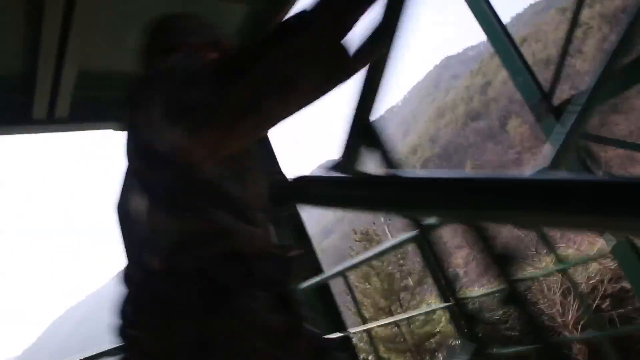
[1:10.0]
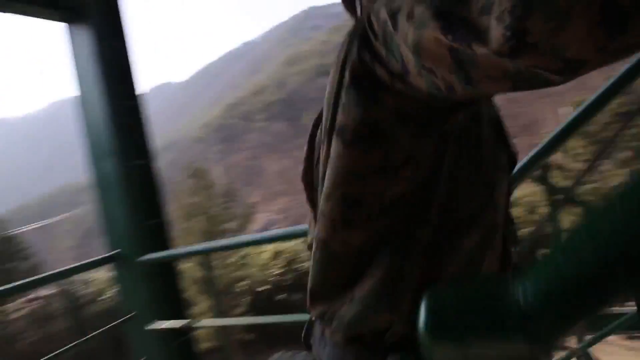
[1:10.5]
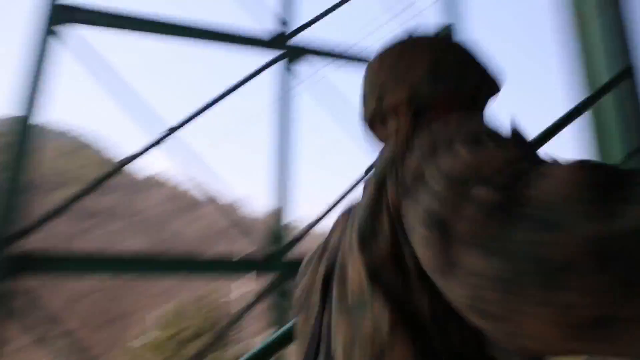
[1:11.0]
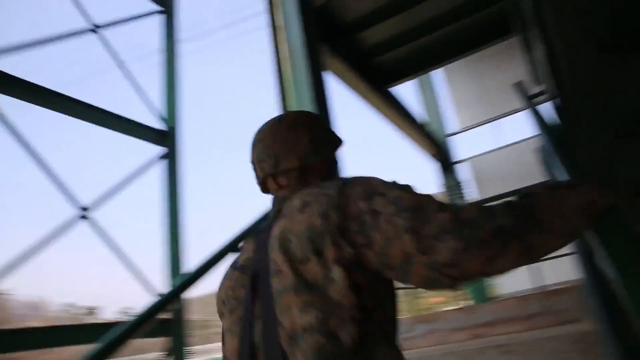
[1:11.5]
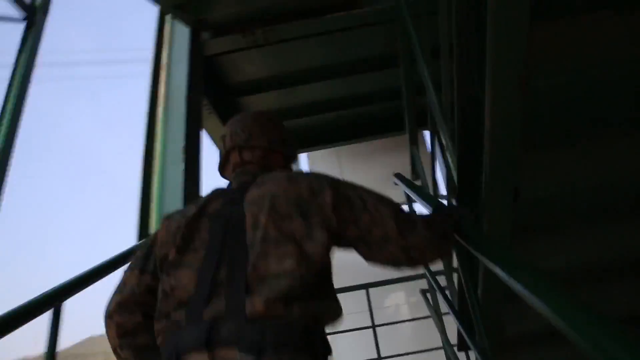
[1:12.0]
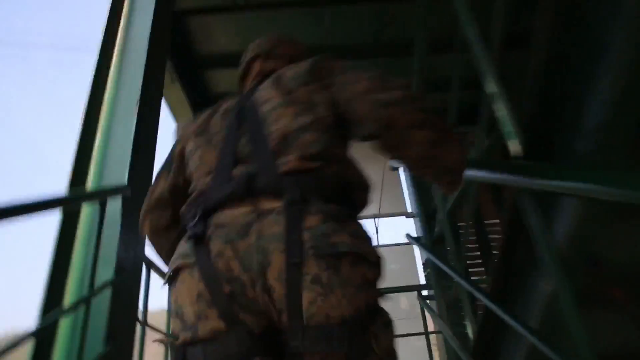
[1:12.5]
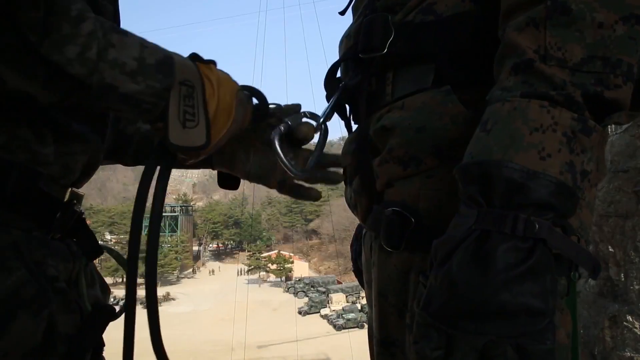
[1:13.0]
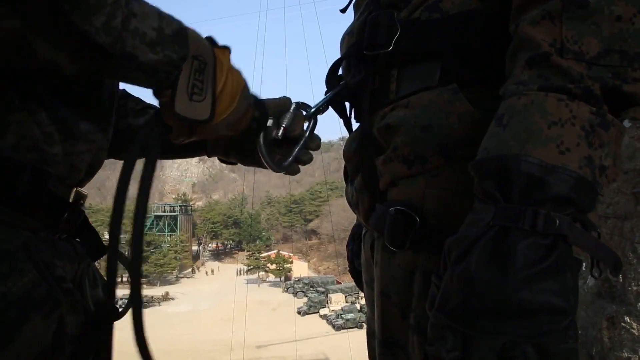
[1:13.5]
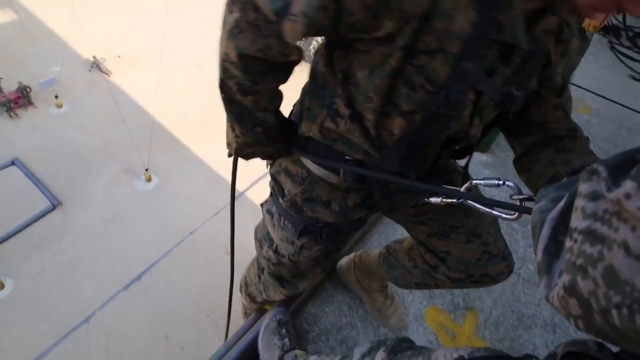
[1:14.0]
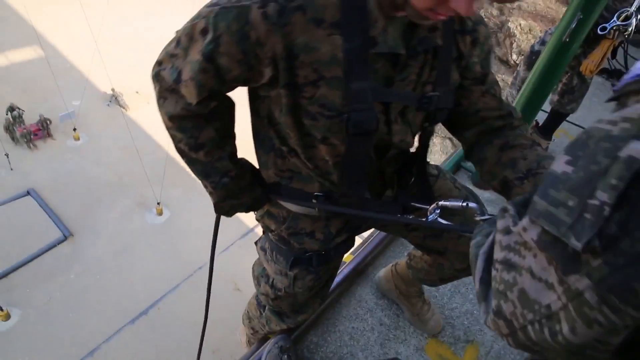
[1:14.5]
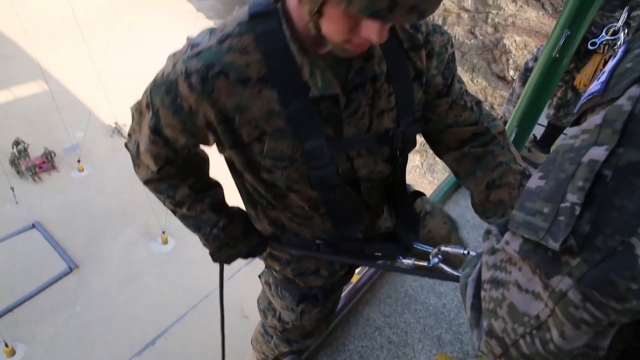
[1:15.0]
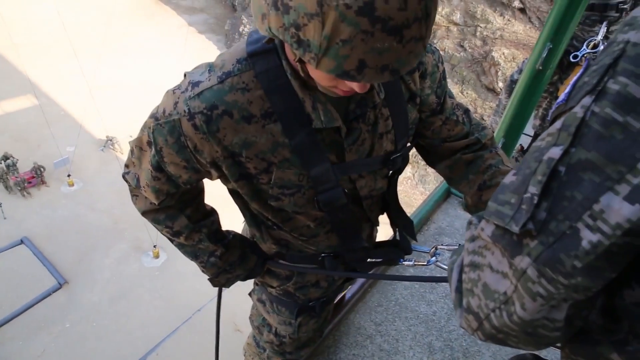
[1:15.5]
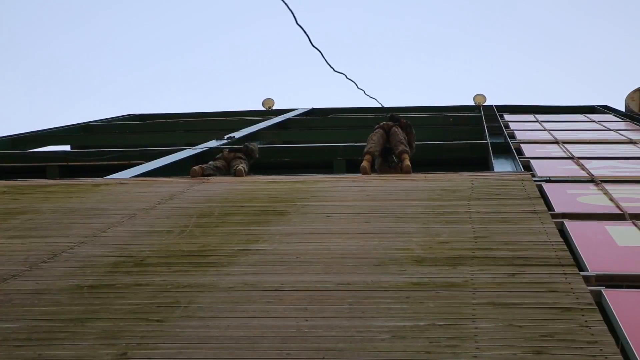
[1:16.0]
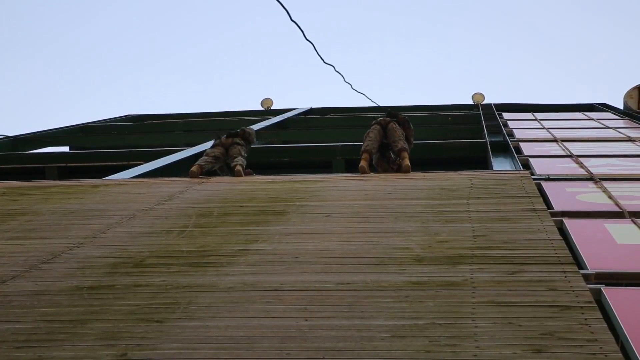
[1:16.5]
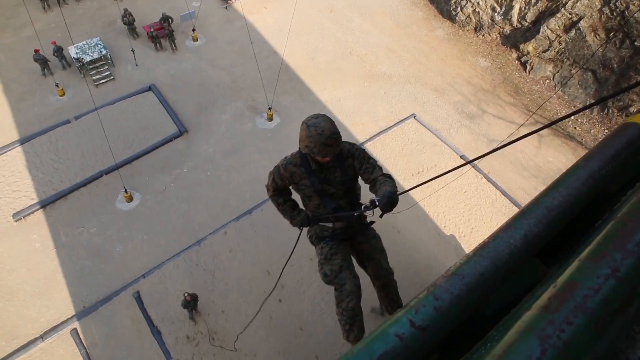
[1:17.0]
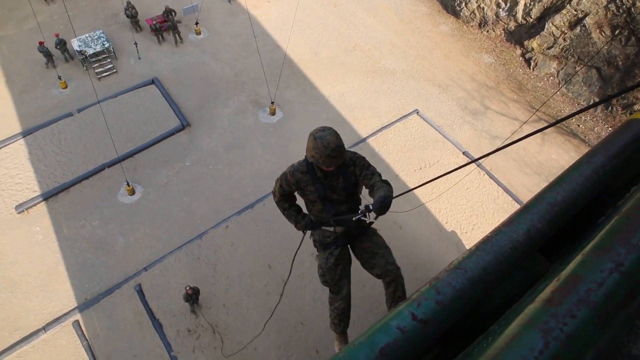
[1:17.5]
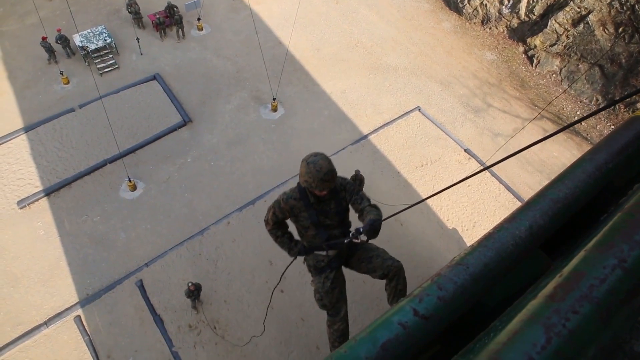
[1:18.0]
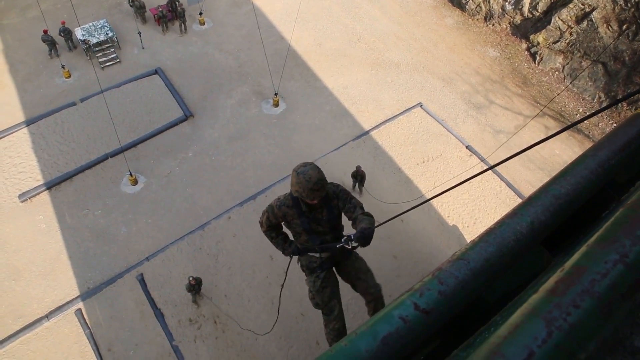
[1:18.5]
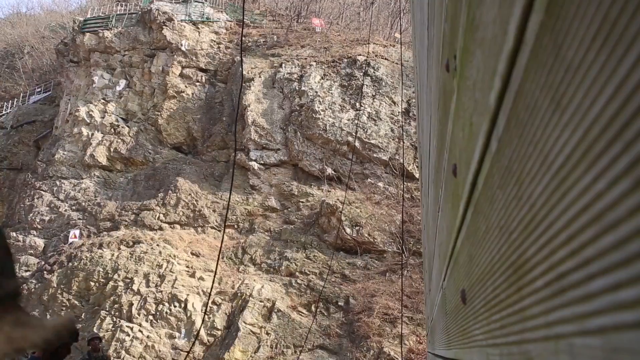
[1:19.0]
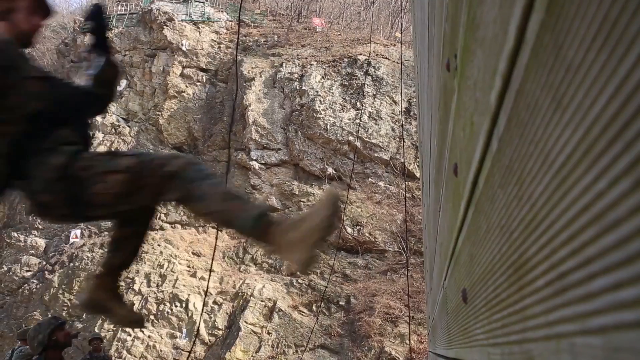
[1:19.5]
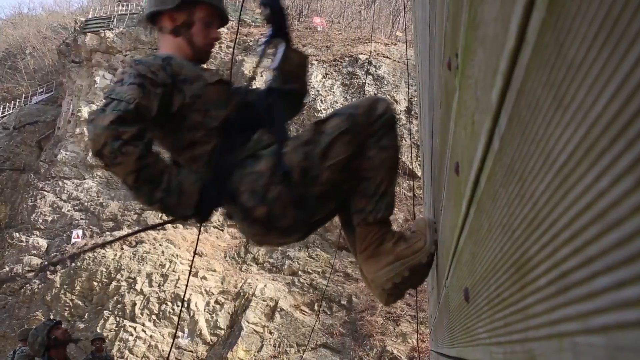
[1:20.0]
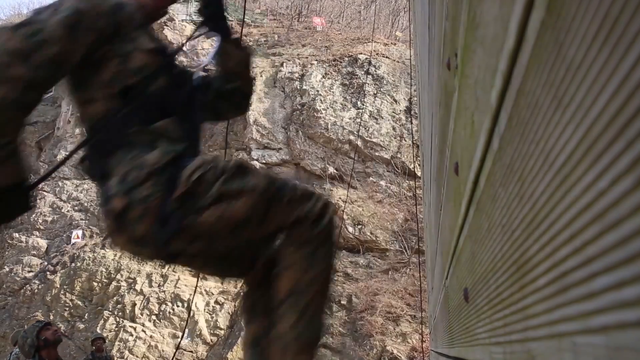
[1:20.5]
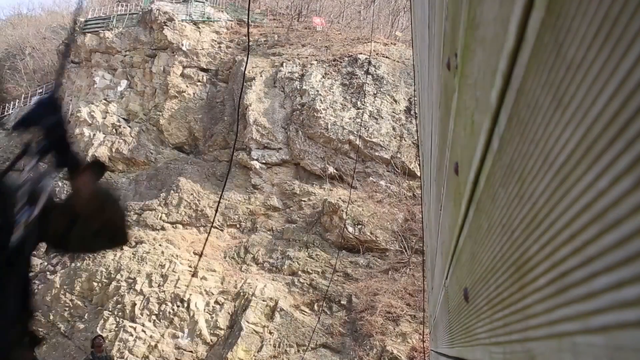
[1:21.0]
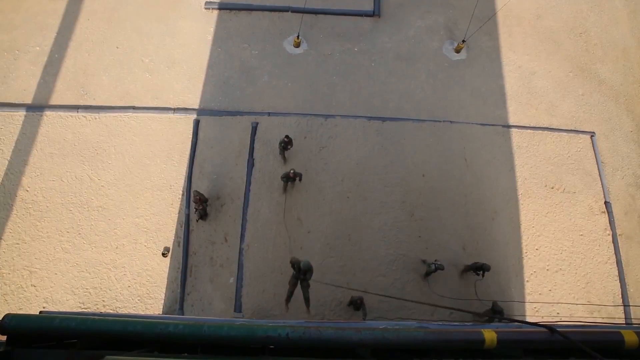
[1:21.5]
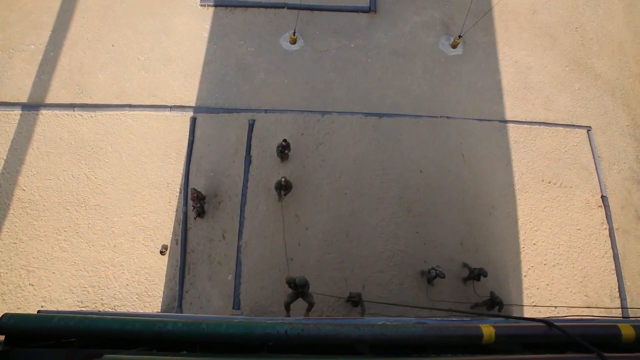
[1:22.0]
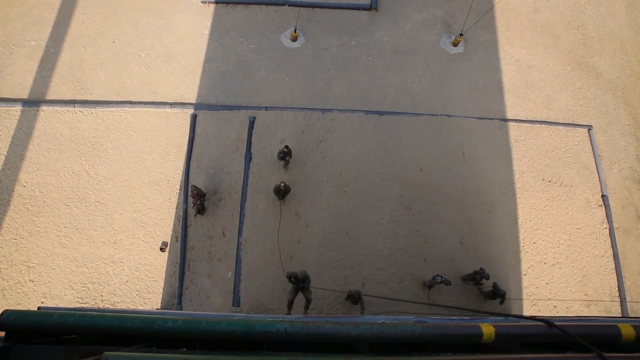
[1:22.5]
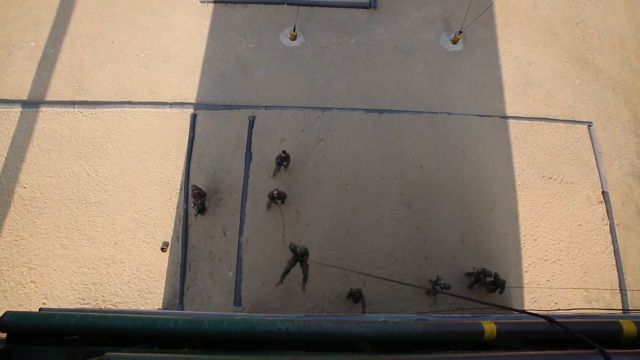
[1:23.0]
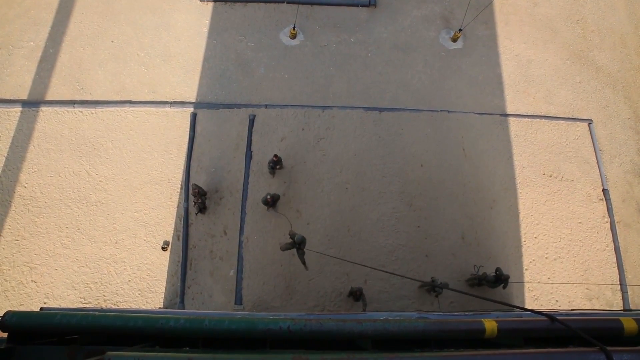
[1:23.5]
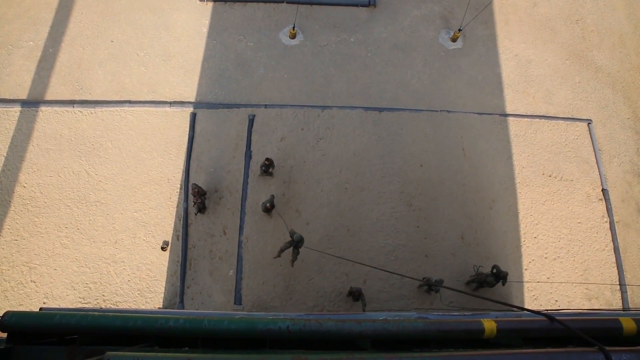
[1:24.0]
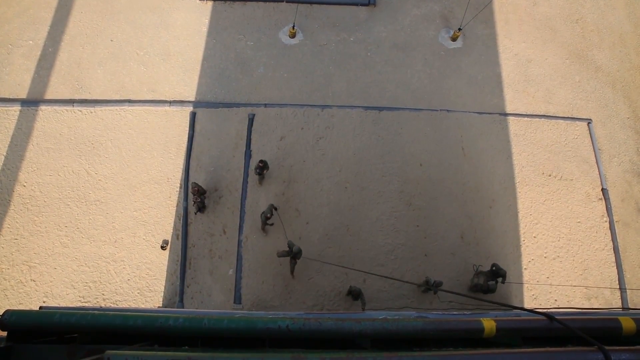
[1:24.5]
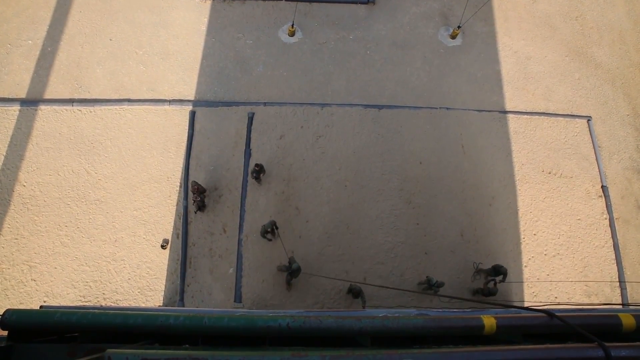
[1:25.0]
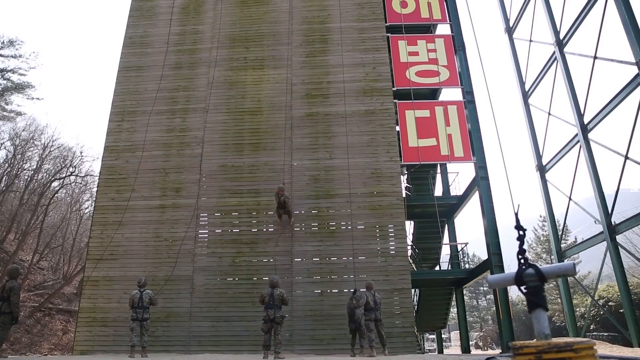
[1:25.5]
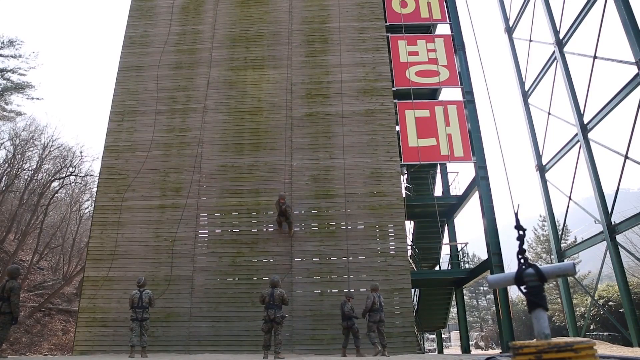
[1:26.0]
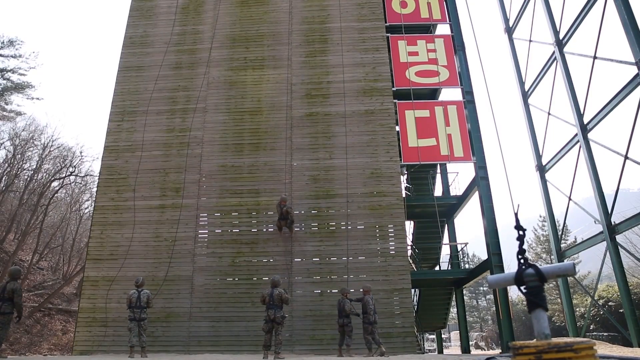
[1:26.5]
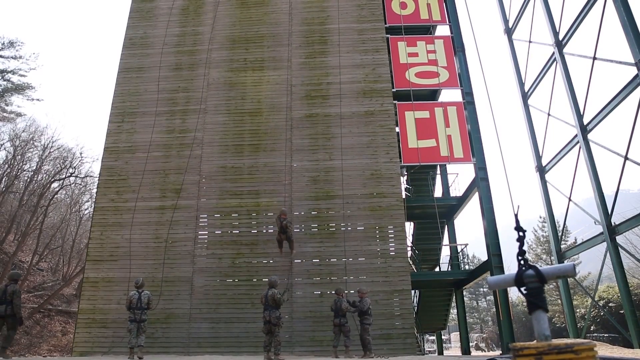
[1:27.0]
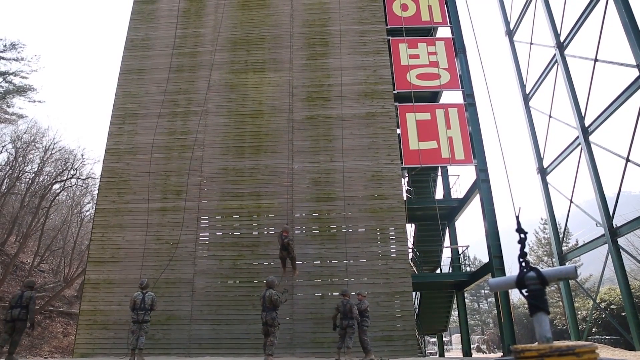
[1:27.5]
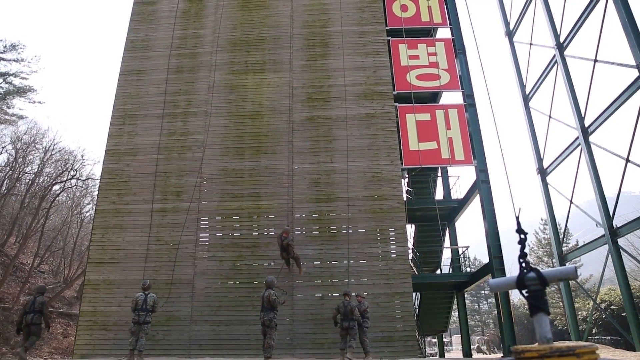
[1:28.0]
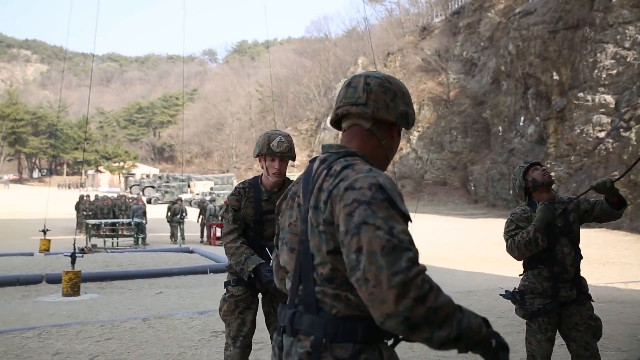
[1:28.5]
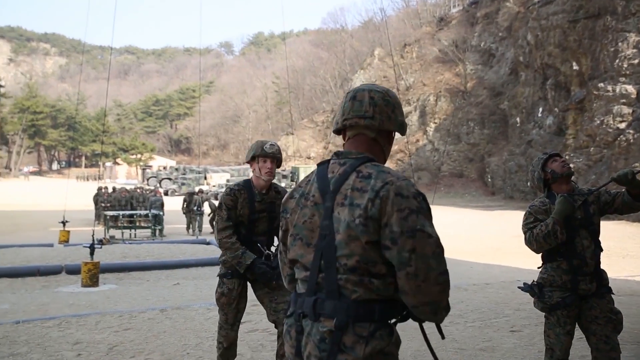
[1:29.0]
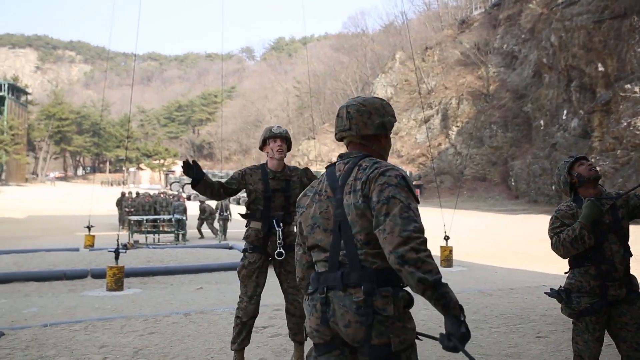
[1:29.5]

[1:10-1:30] A soldier climbs the stairs inside the tower structure on the parade ground. He ascends quickly, and his instructor attaches the safety rope to the hook on the soldier's harness. He prepares to make the descent from the top of the tower, harnessed in place, while a second soldier to his left does the same descent at the same time. He walks down the wall, taking jumps as he descends, and lands carefully, monitored by the instructor on the ground, who also holds a safety rope connected to him. That soldier then does a star jump once the move is completed. Several other soldiers are about to do the same move, and their instructors wait for them at the bottom of the tower. The tower appears to be constructed of metal girders made into a frame painted green, with the wooden planks at the front.